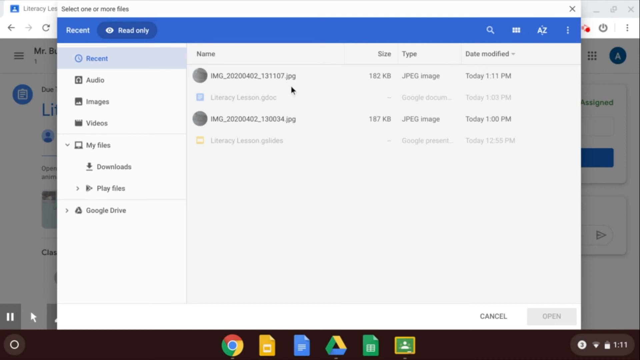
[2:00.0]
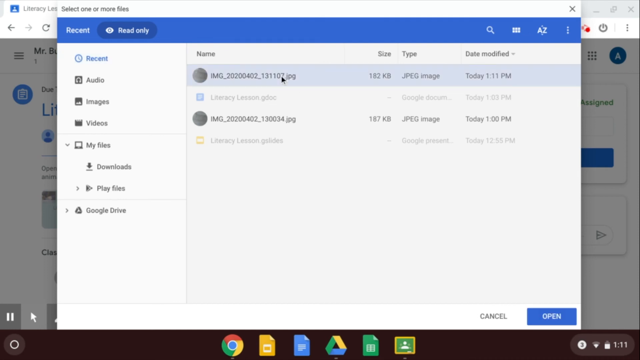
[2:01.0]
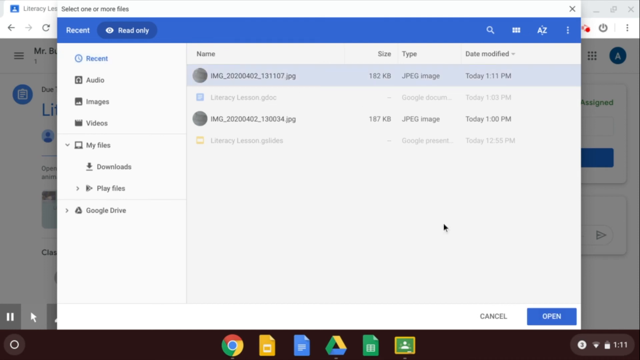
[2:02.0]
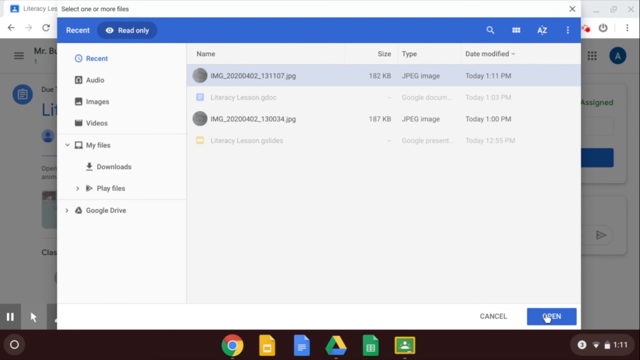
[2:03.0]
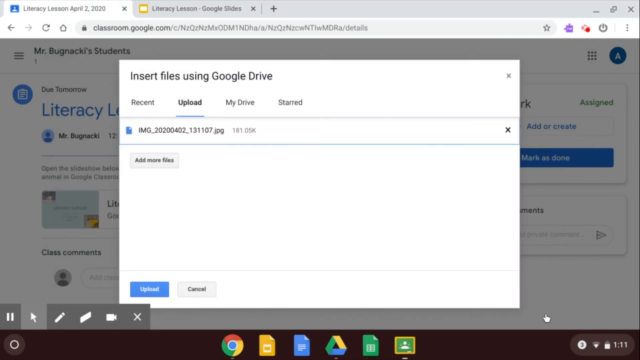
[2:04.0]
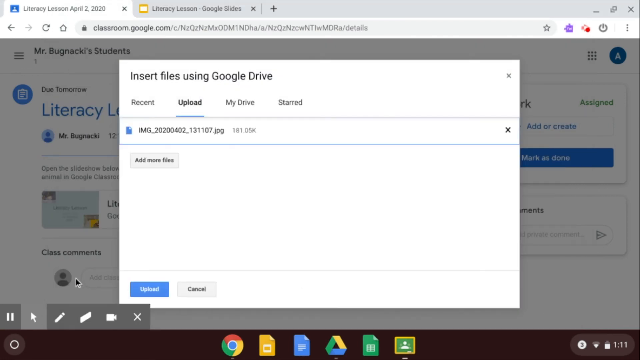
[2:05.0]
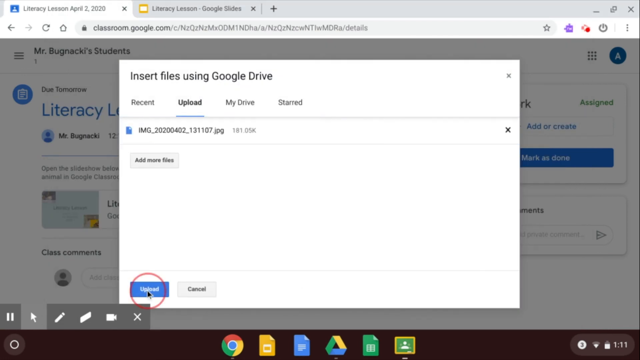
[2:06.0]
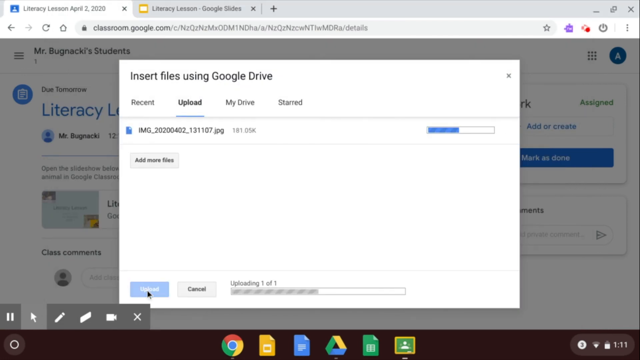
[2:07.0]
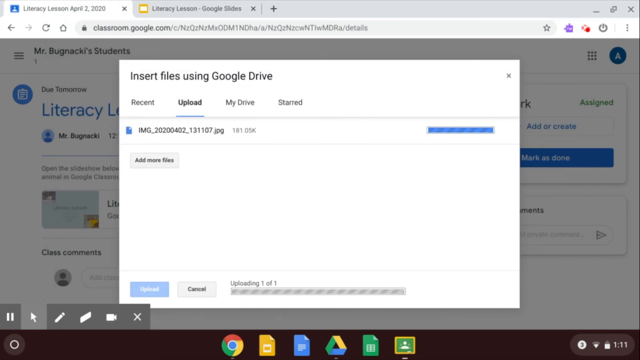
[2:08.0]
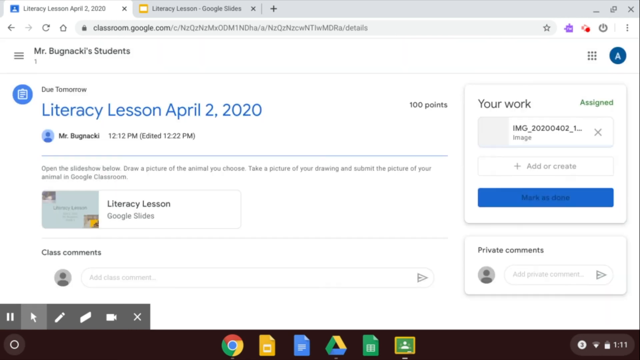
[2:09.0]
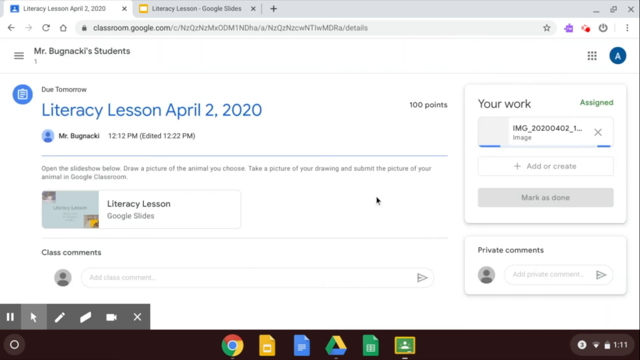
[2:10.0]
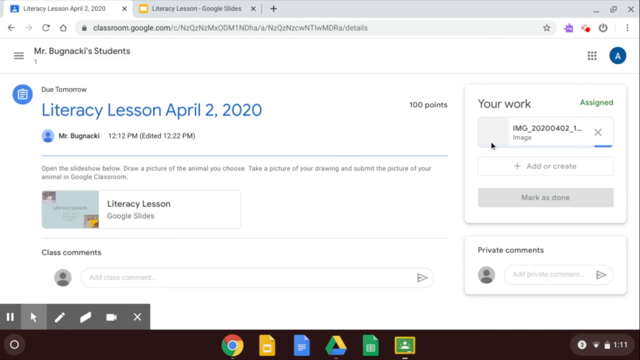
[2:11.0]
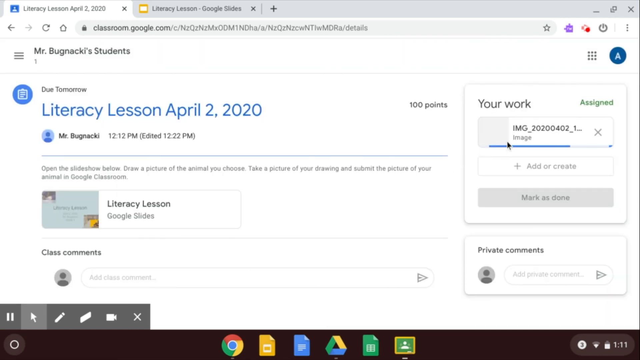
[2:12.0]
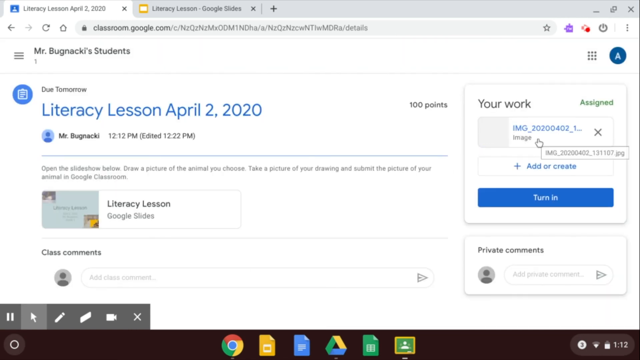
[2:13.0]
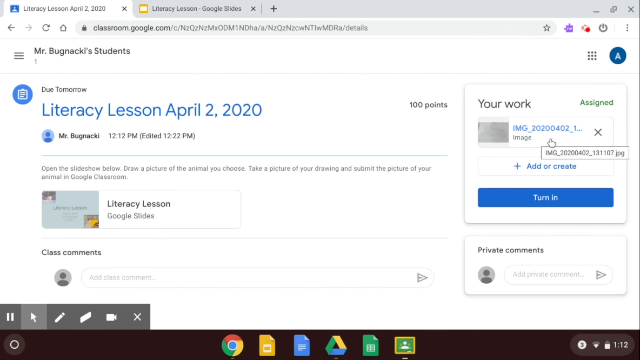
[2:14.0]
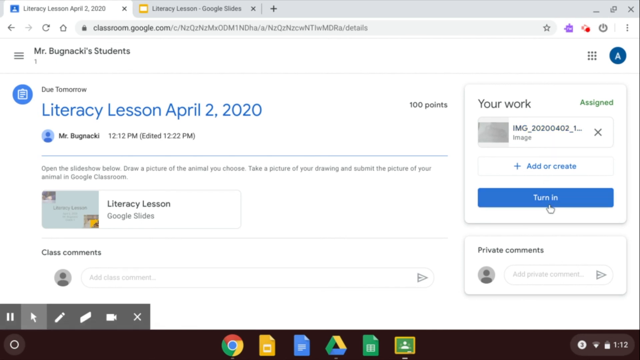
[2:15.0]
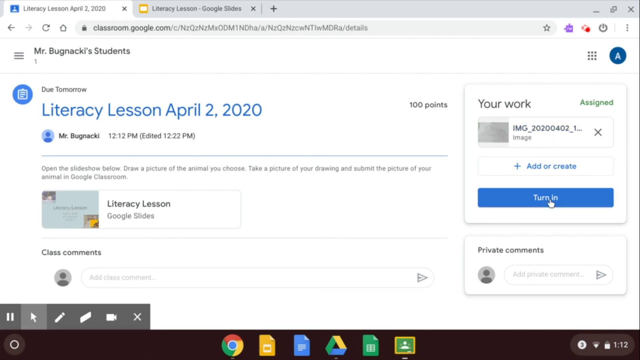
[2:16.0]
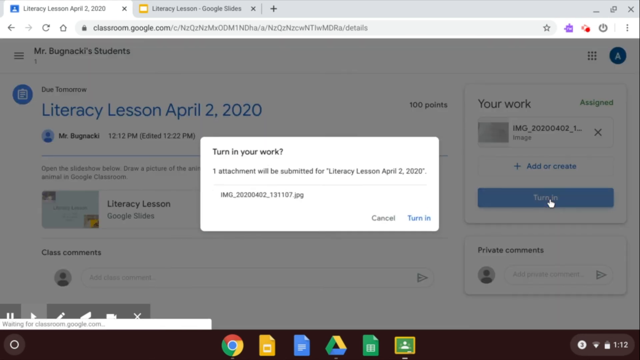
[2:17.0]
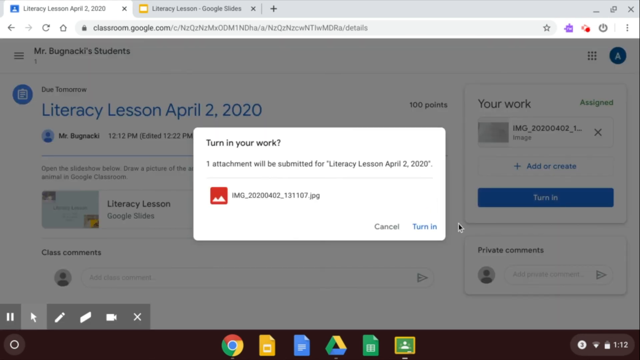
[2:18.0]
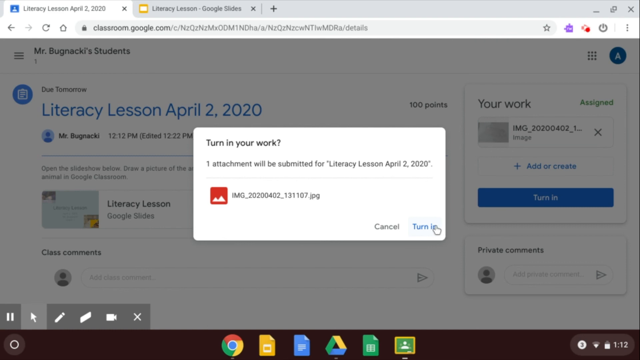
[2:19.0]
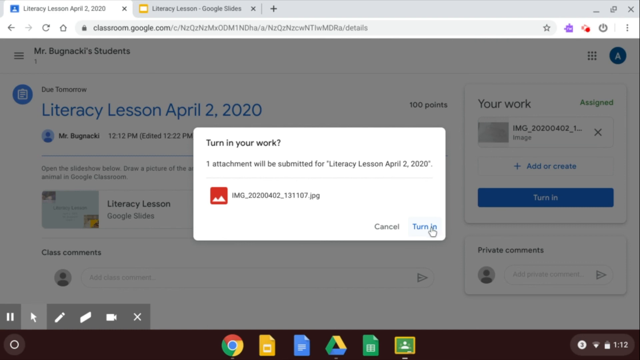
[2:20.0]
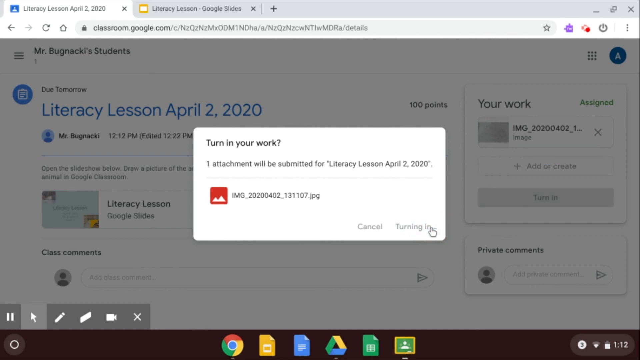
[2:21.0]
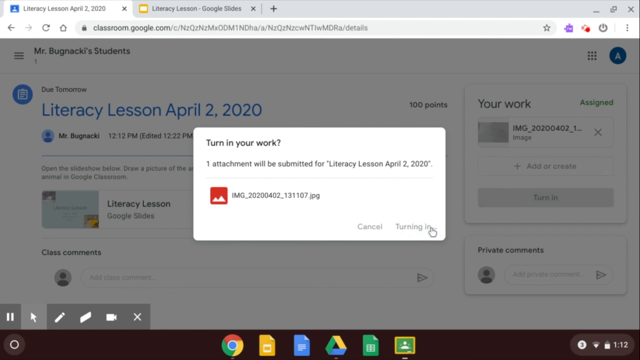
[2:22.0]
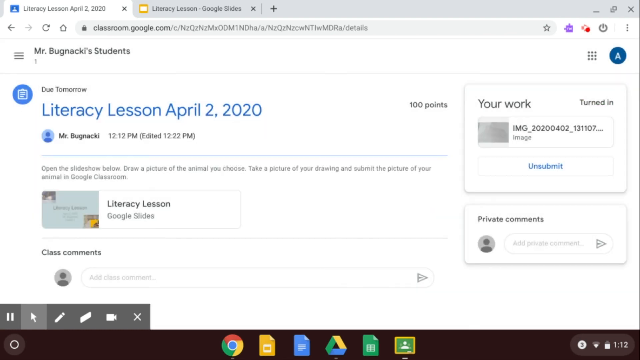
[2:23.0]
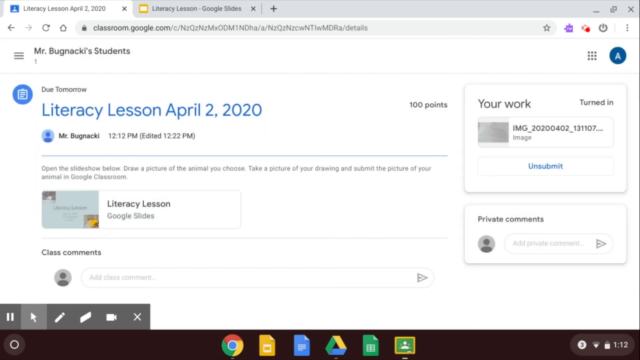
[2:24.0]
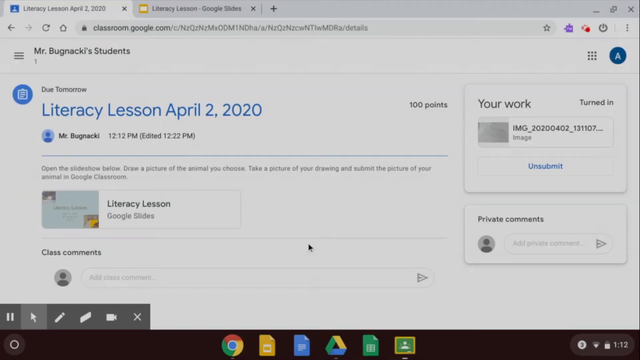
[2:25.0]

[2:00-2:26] The demonstrator, having used the camera to capture pictures of a tiger and stored them on the Chromebook, clicks the tab icon that says "add or create" and then the image tab. He demonstrates how to upload the pictures, clicking the upload icon so the image uploads, and then clicks the tab that says "turn in." After clicking it, the uploaded images show up on the assignment. Below the turn in tab is an option for private comments, where questions can be typed to the lecturer, Mr. Buknakis.